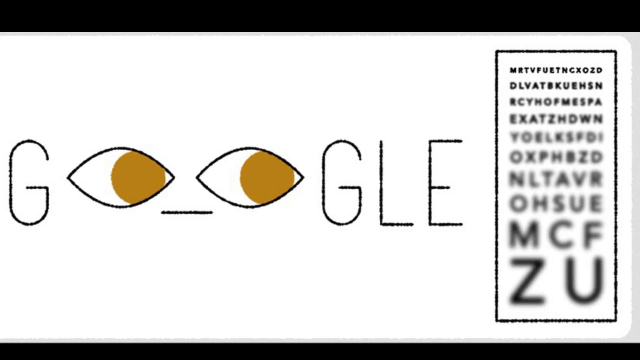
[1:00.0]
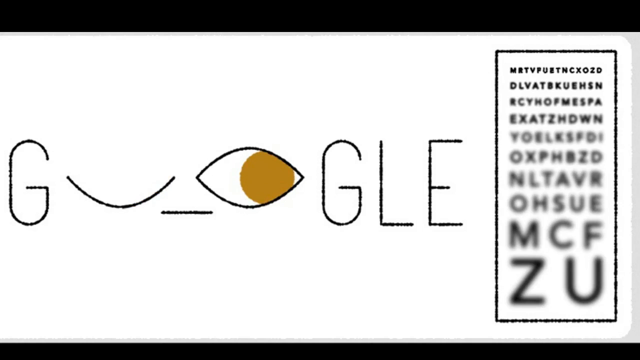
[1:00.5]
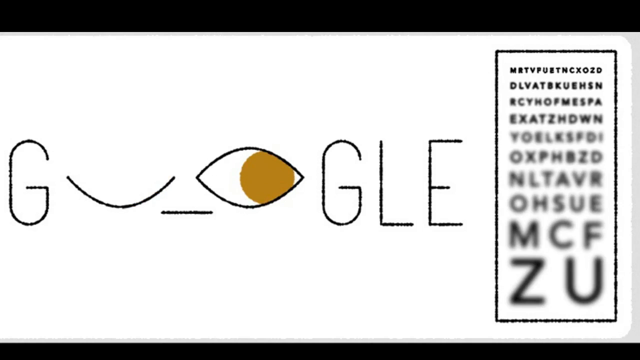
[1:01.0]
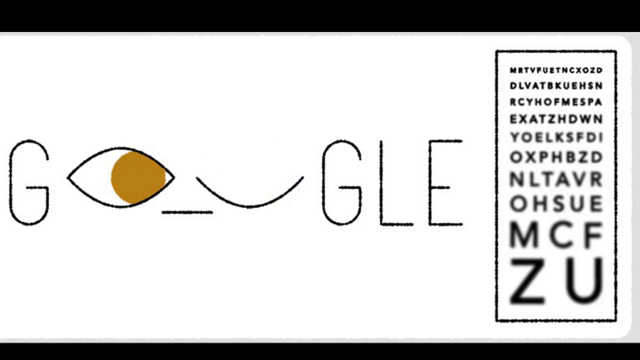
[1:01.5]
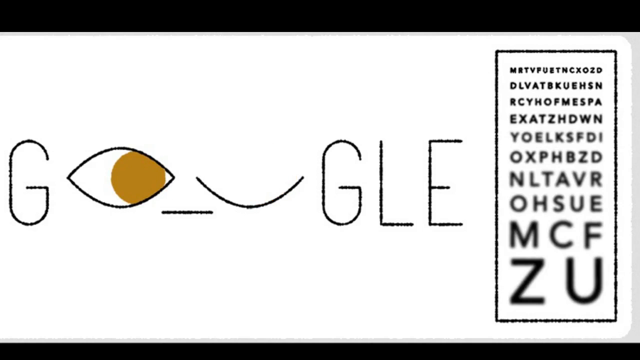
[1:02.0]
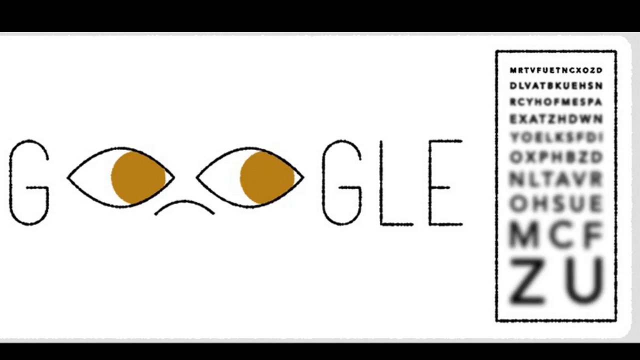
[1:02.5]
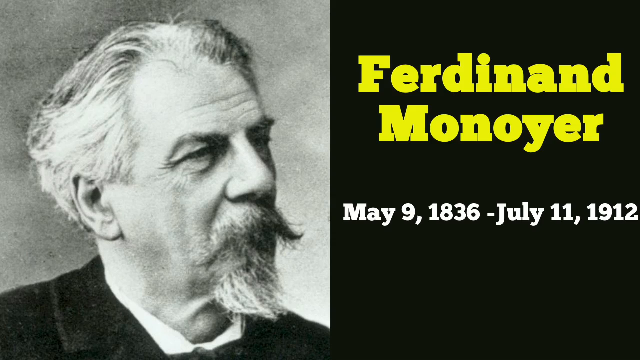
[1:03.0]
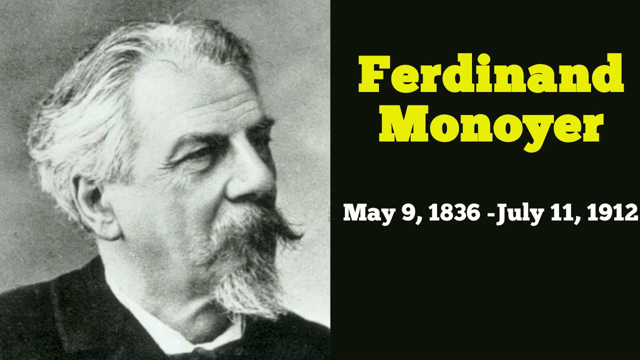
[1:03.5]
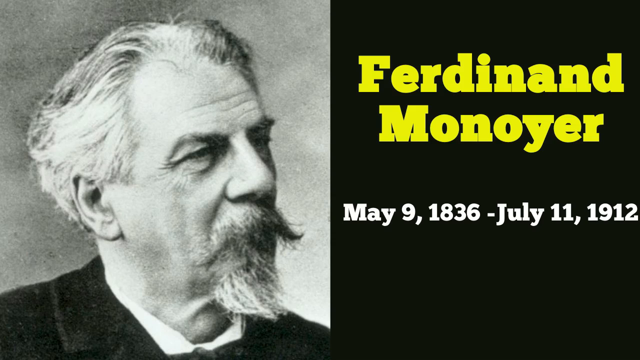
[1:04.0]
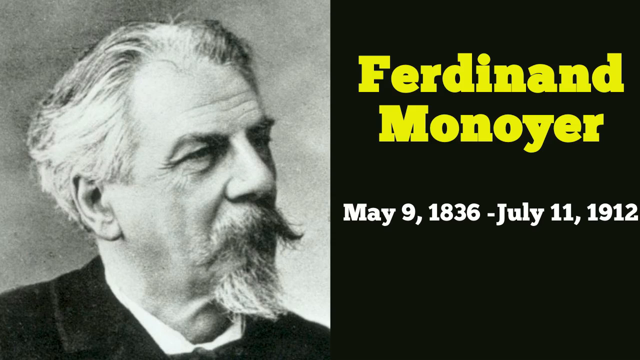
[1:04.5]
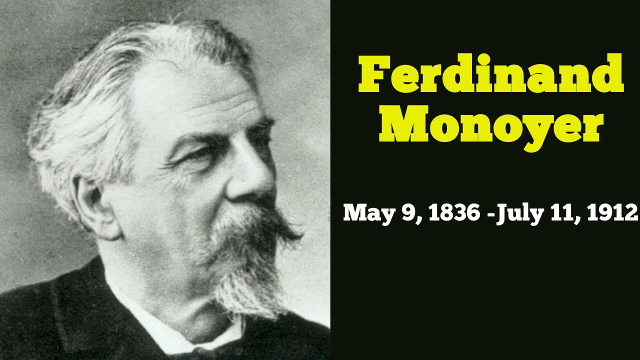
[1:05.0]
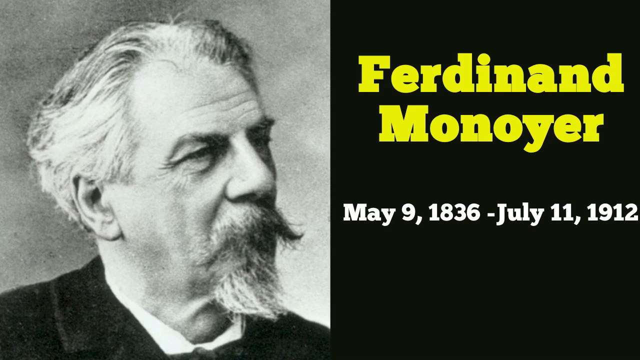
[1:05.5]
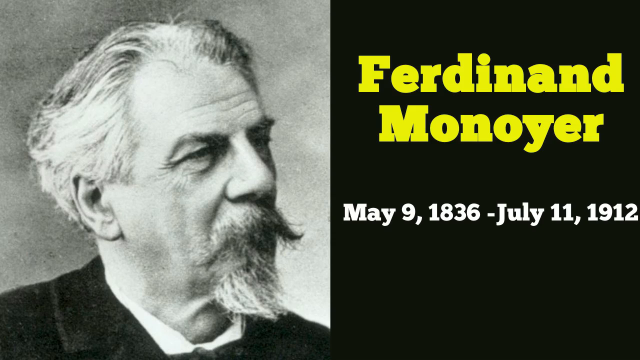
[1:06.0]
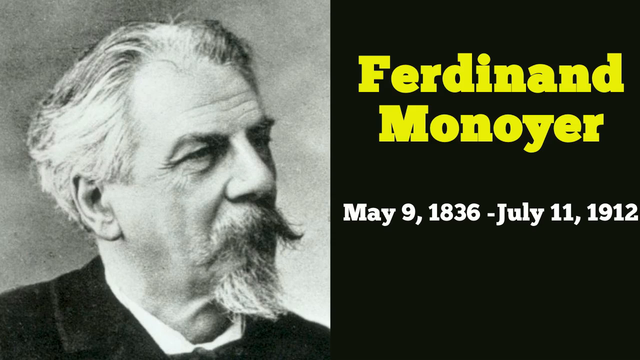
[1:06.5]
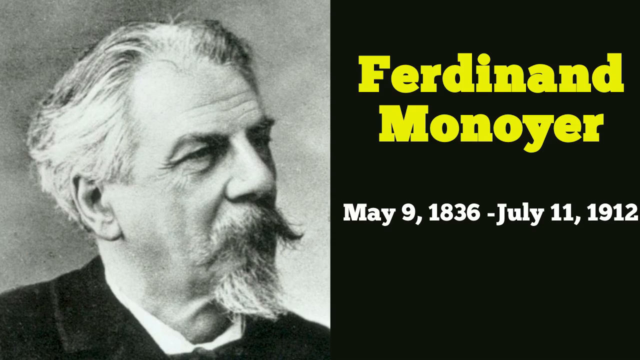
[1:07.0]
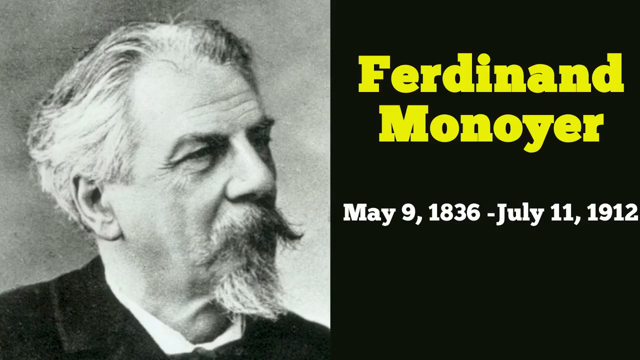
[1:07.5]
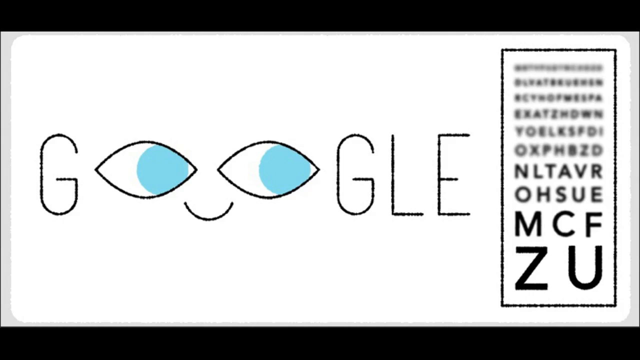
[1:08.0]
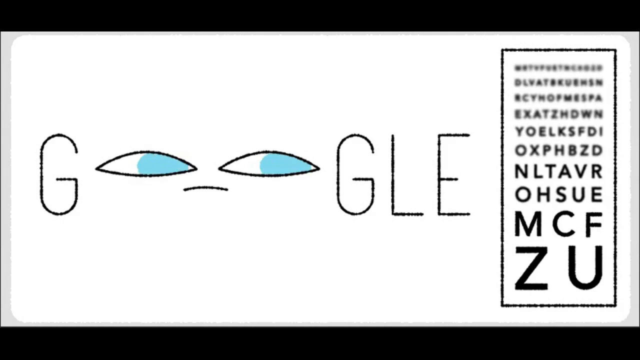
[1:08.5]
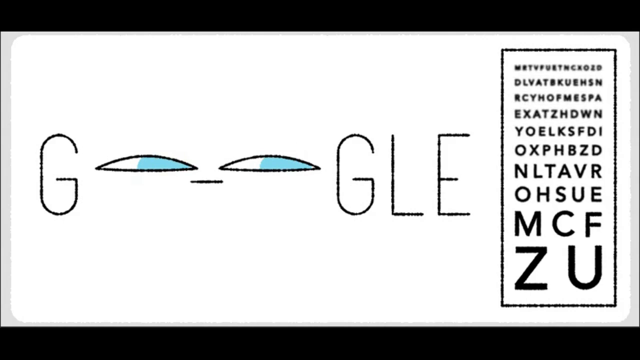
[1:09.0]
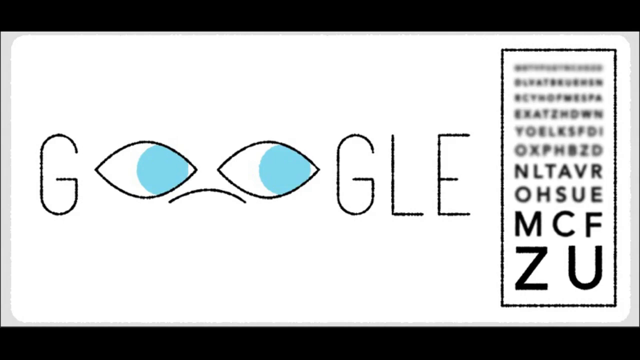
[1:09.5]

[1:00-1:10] The word Google is written in black, with its two O's made up of two eyes. The eyes are in continuous motion and continuously change colors. An eye appears to wink, and both eyes seem to close. The mouth is sometimes sad and sometimes a straight line, seemingly showing indifference. The screen then changes to an older gentleman from a time long ago on the left side of the screen, with a black background on the right side showing his name, Ferdinand Monoyer, written in yellow, and beneath it his dates of birth and death.